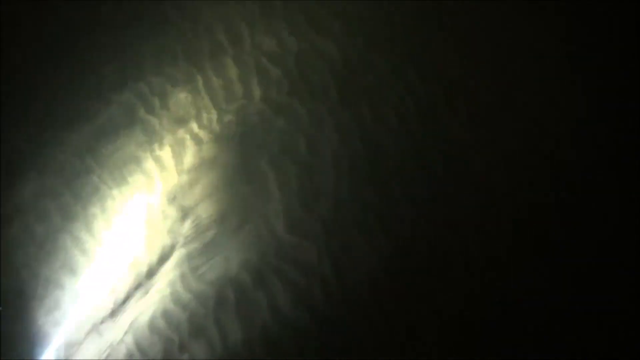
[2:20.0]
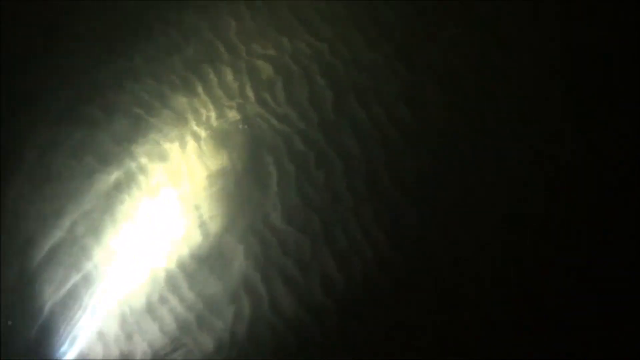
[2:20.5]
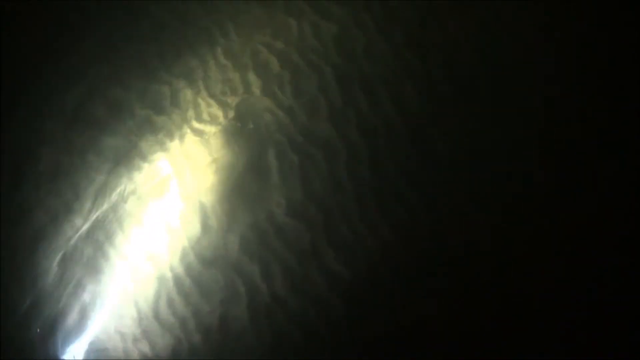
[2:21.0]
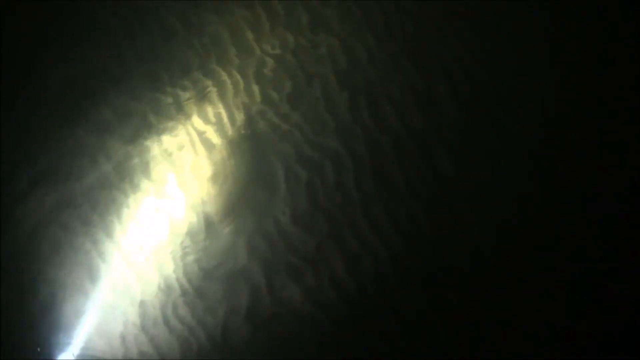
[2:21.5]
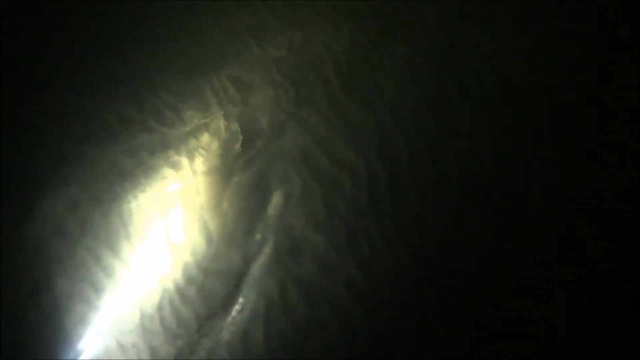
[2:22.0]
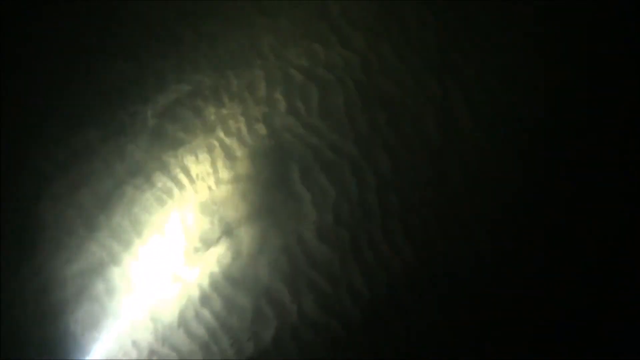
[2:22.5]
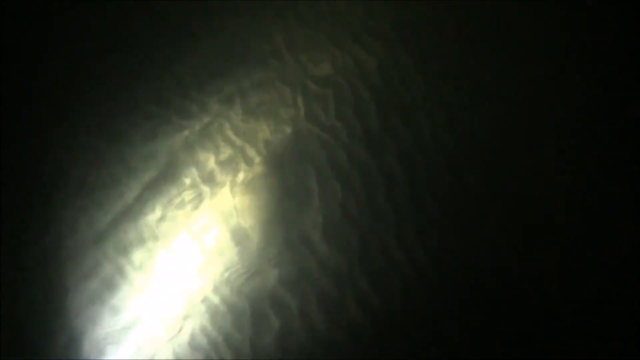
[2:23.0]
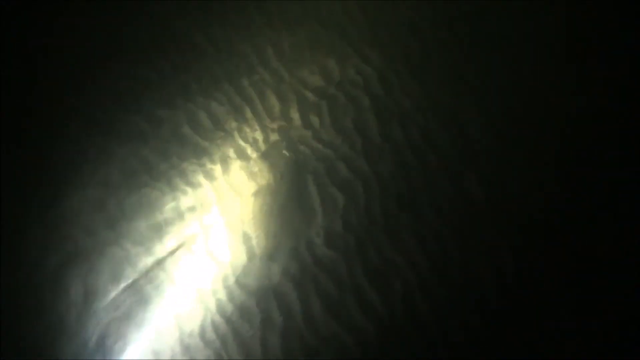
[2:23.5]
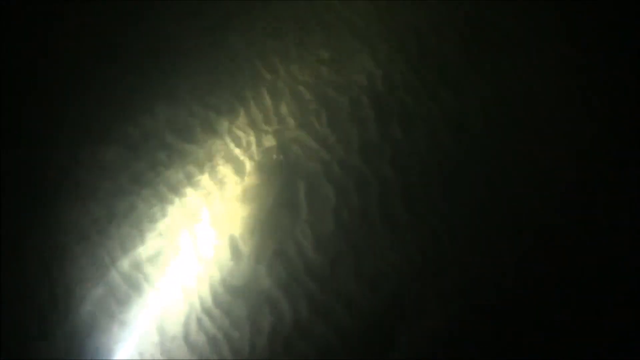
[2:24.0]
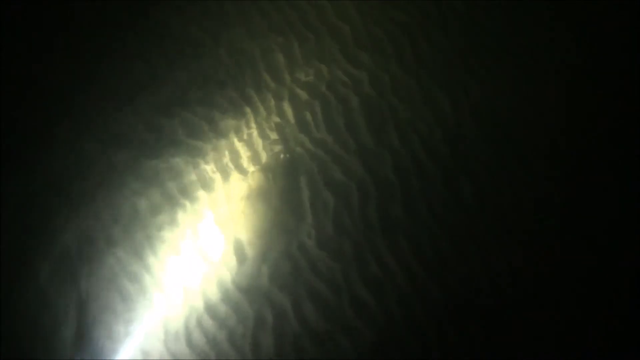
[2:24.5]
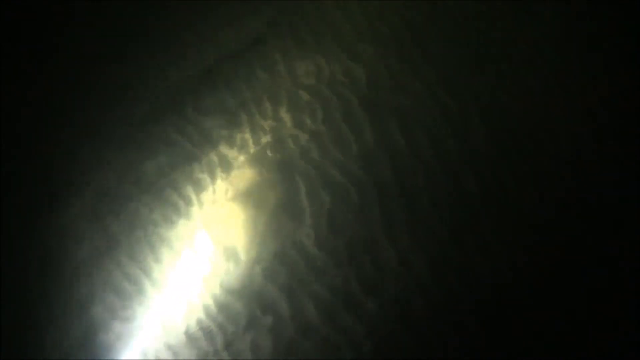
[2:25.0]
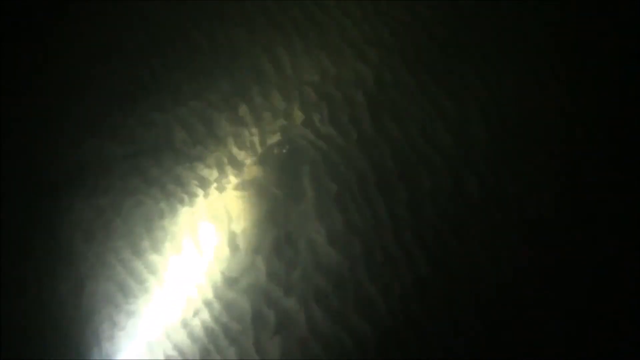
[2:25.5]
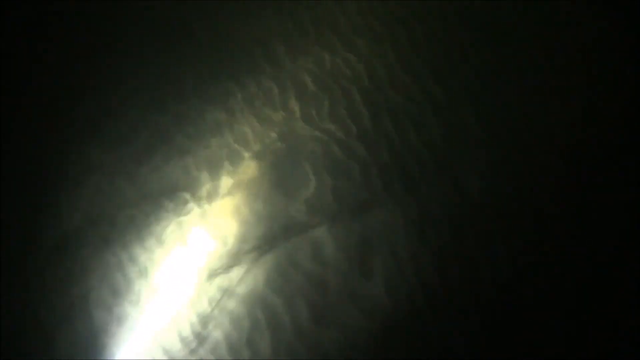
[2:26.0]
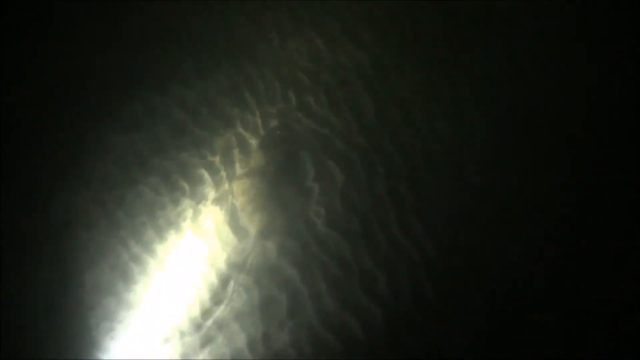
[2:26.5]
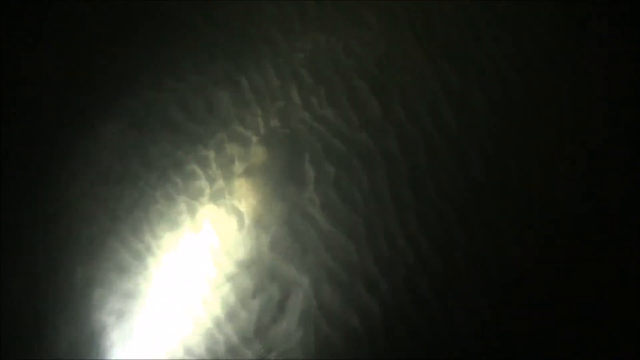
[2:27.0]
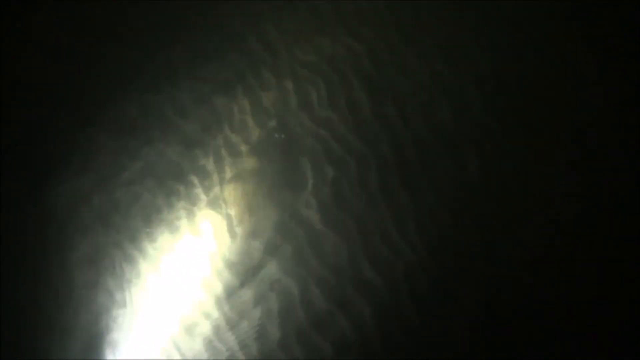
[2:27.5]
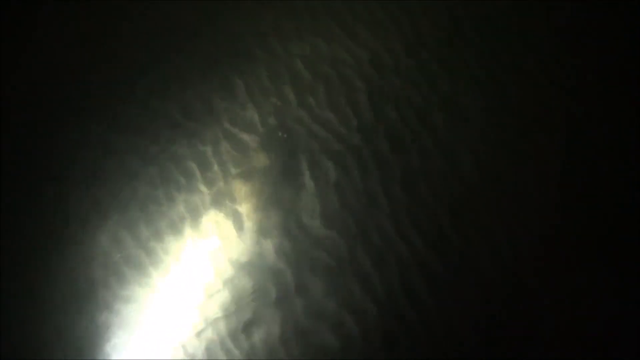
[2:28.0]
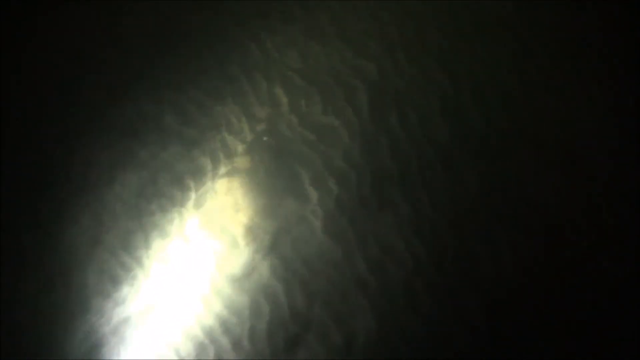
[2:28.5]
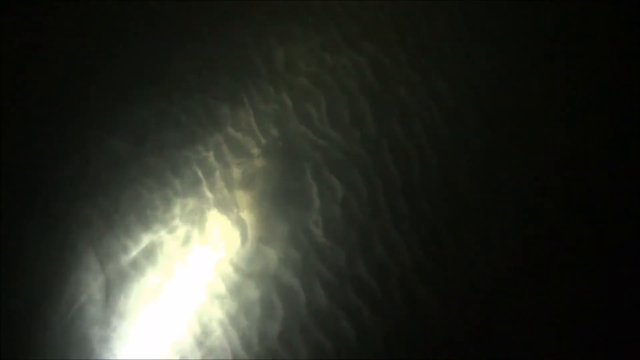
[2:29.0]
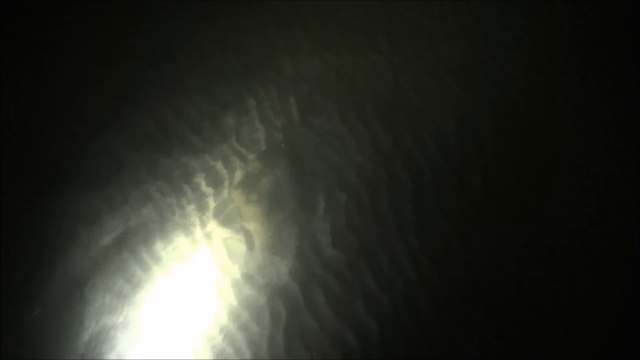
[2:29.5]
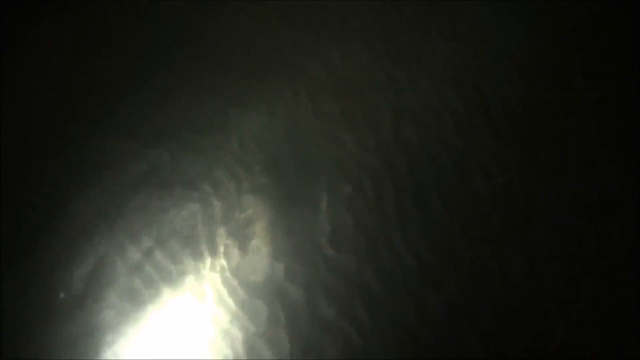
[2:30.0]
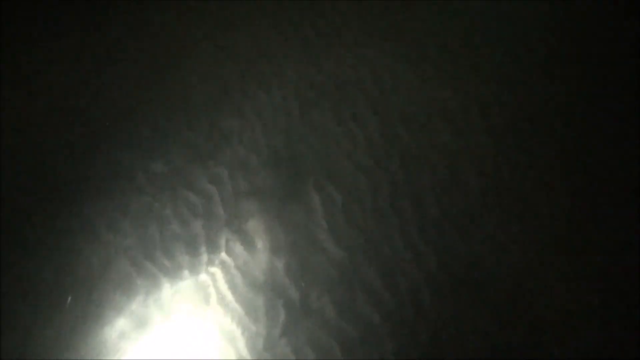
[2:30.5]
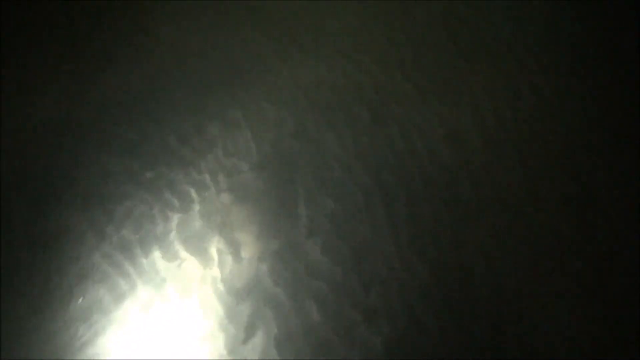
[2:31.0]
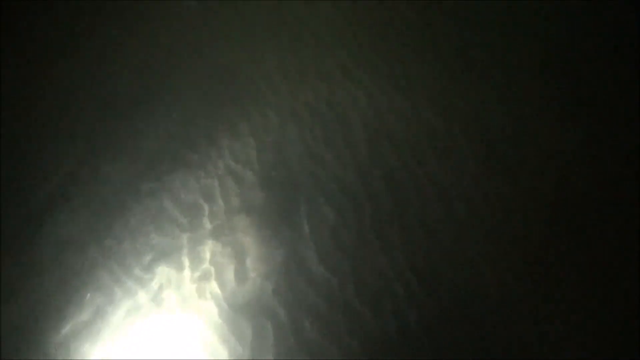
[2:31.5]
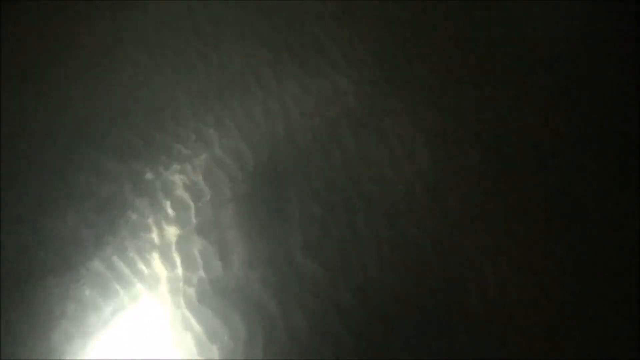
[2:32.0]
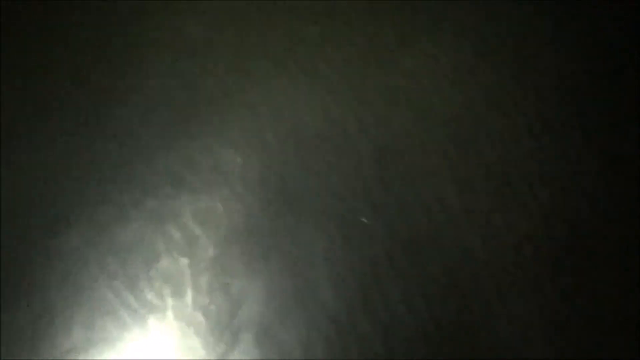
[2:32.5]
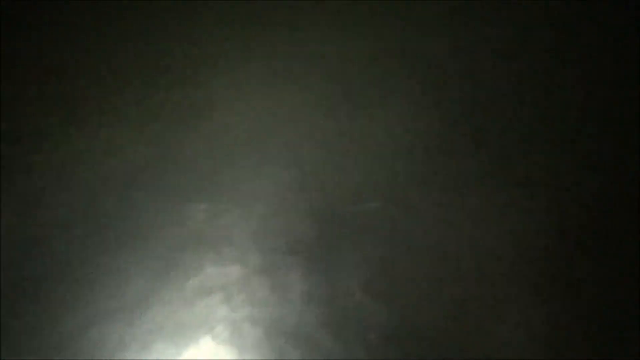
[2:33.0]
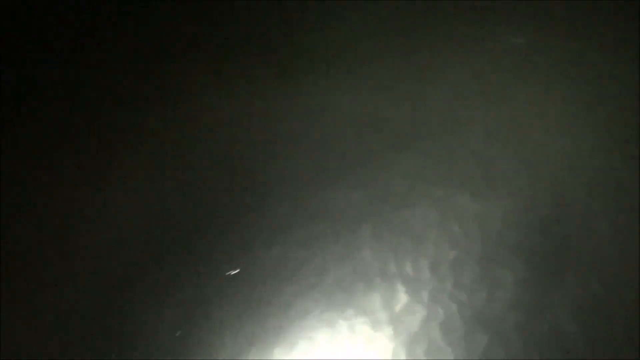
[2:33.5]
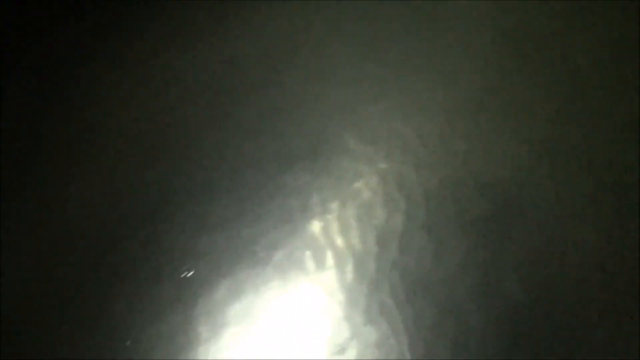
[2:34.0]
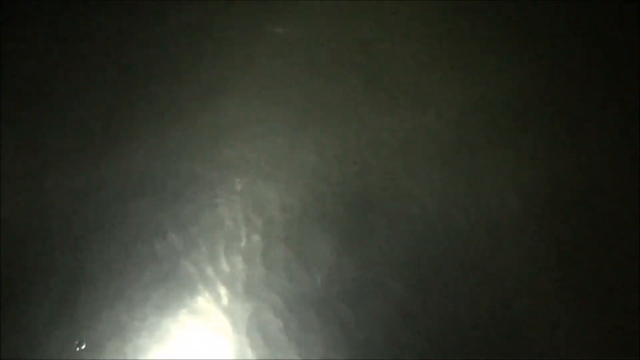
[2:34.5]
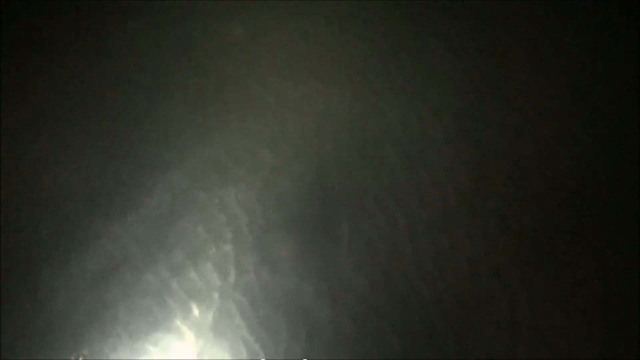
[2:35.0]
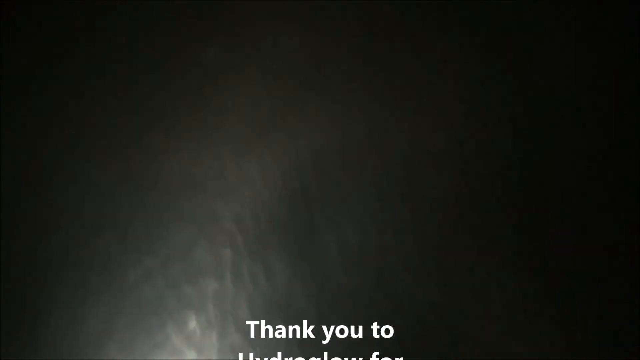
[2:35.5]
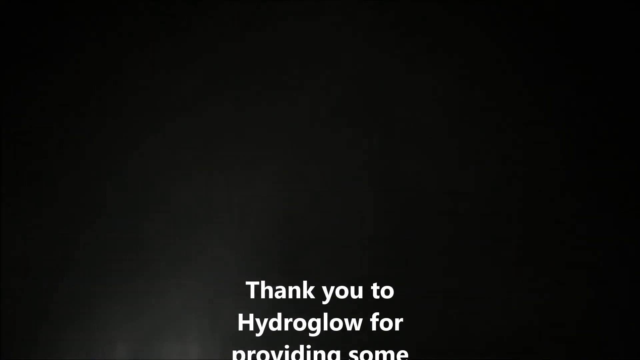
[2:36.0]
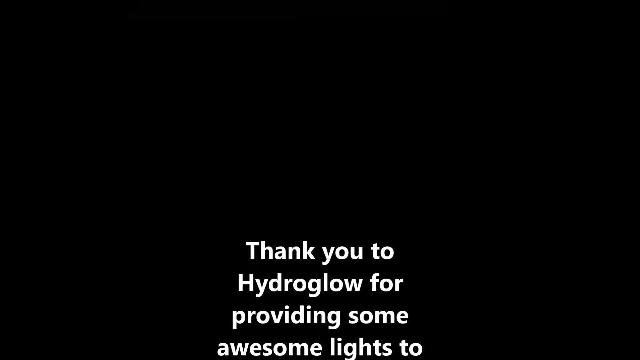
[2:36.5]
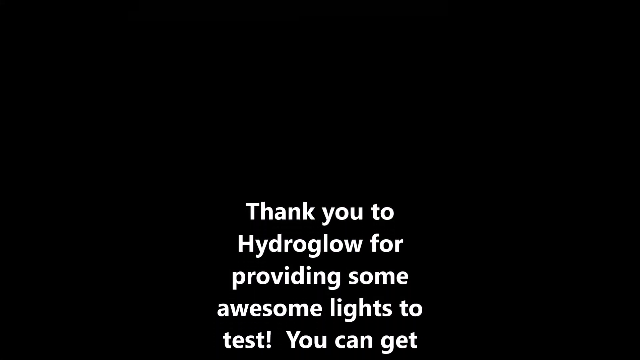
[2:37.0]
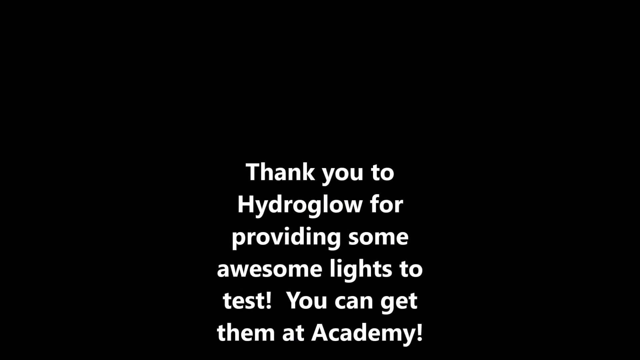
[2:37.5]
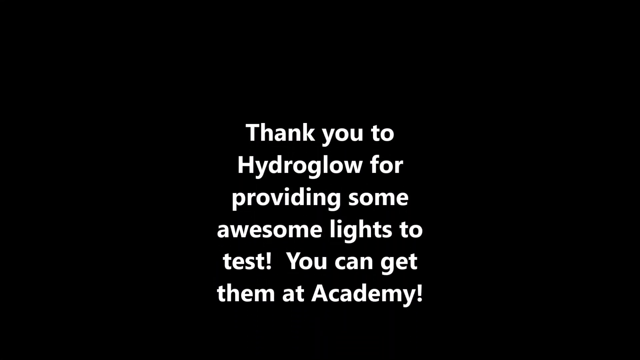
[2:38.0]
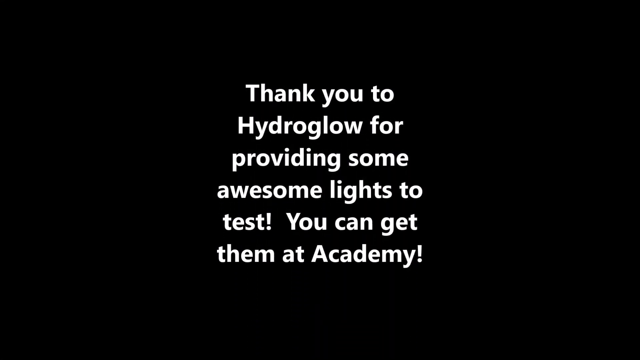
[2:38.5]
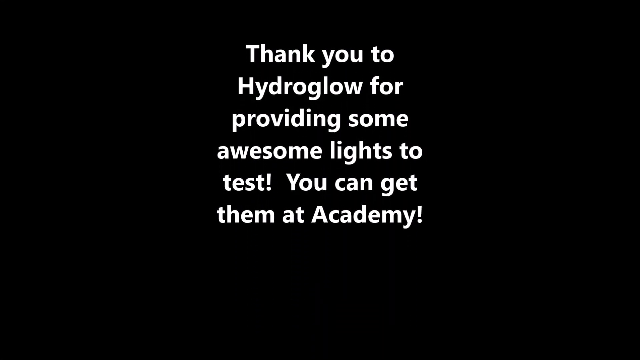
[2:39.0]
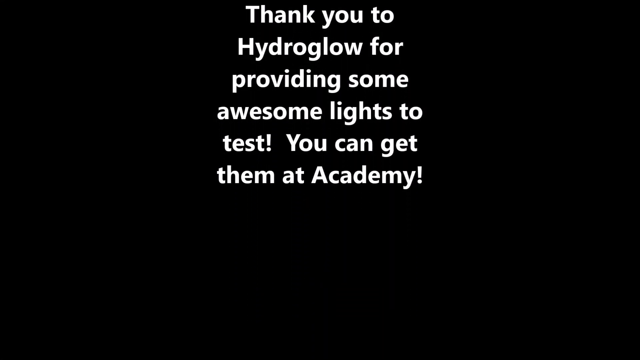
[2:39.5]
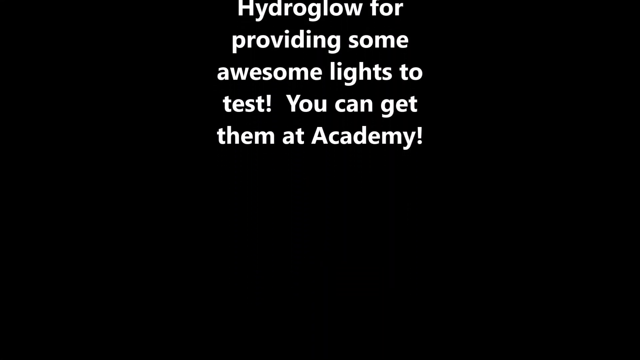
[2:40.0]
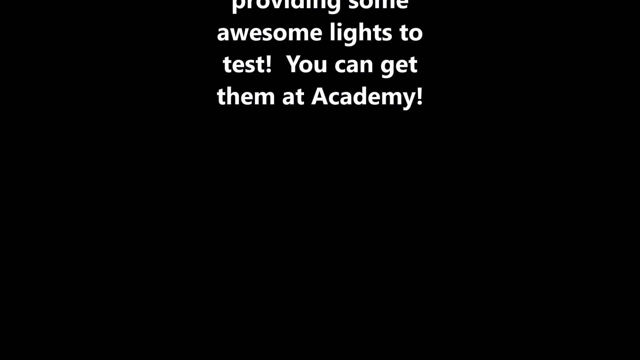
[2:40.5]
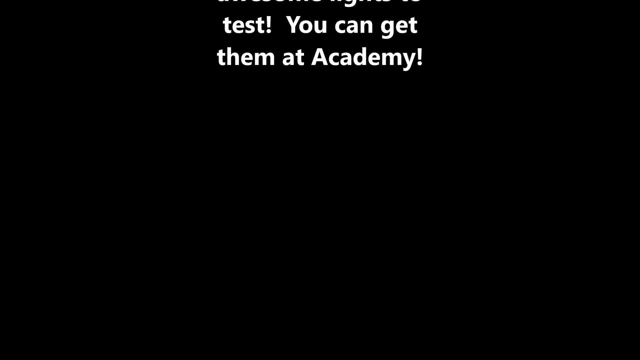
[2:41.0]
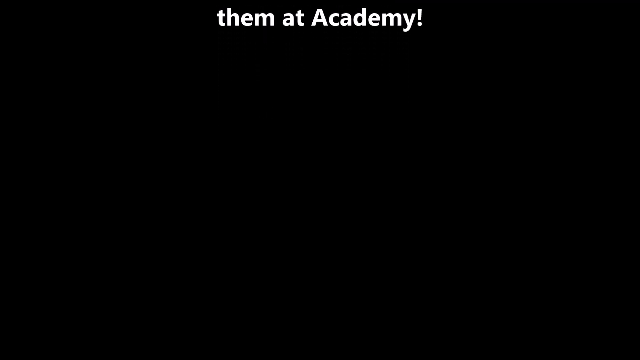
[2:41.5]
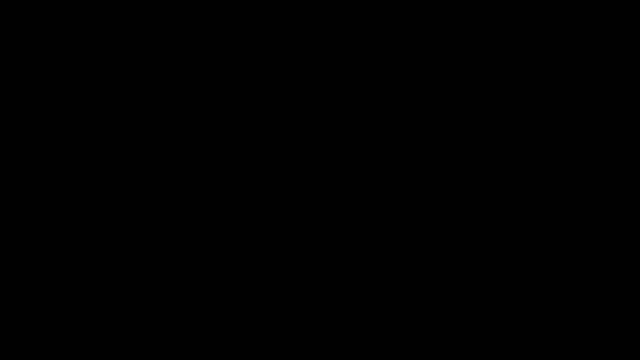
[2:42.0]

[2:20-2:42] The water continues to be recorded, with the light illuminating the sandy ground below. There seems to be a stone or something in front, which is not easy to discern. At the end, white text appears on the screen: "Thank you to HydroGlow for providing some awesome lights to test. You can get them at Academy!"